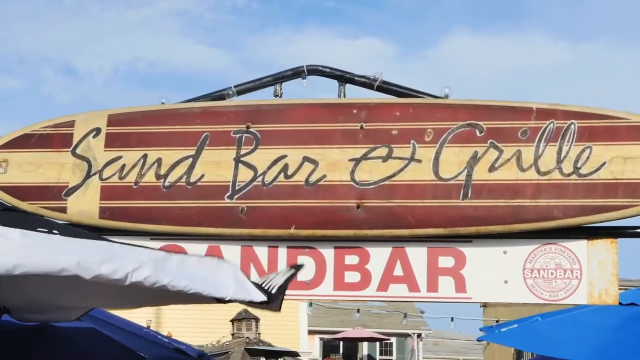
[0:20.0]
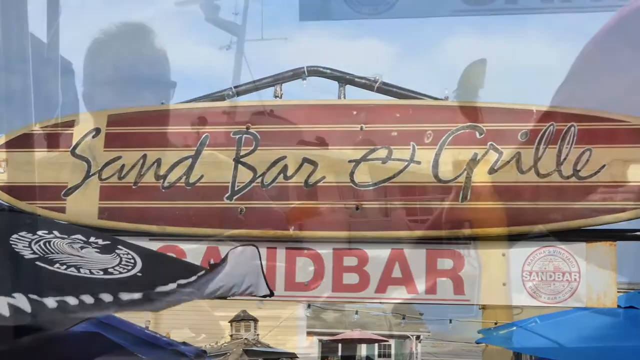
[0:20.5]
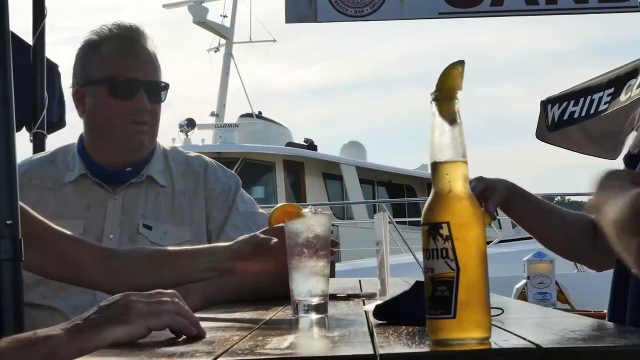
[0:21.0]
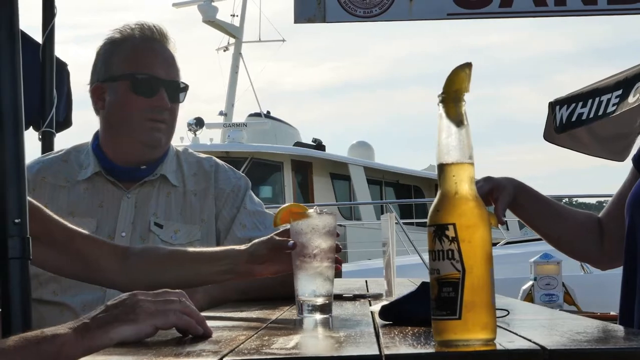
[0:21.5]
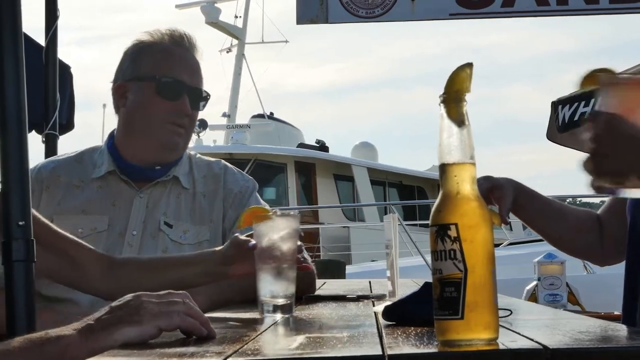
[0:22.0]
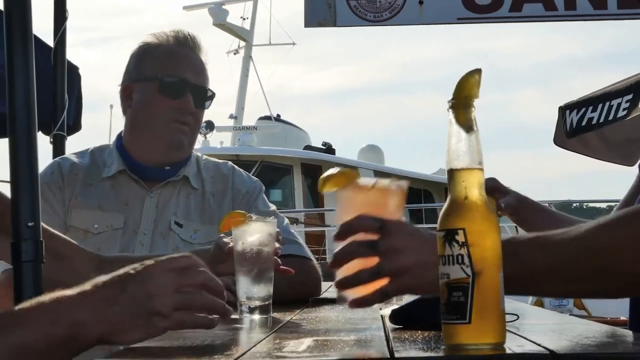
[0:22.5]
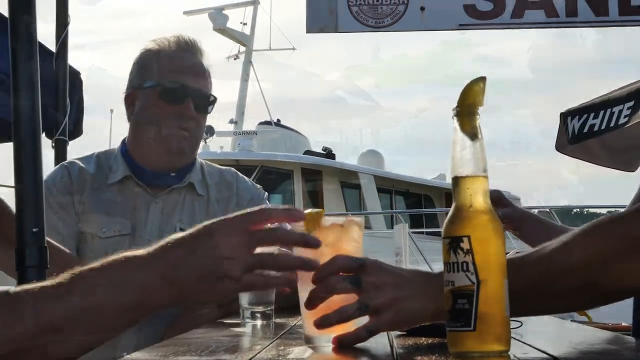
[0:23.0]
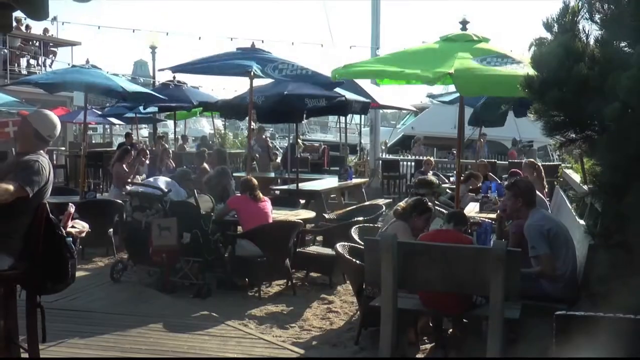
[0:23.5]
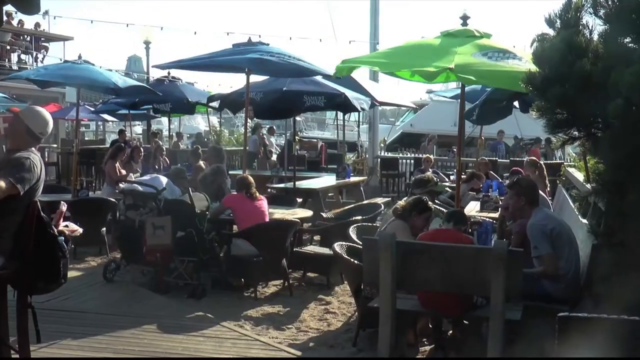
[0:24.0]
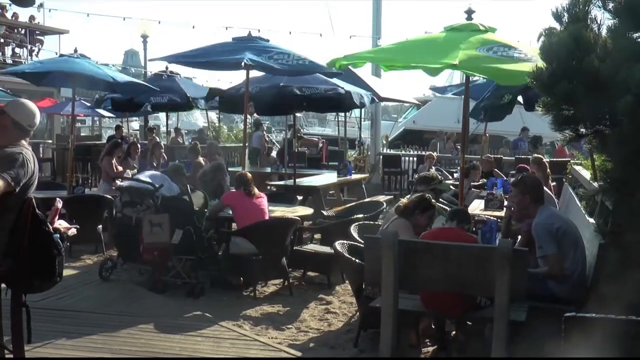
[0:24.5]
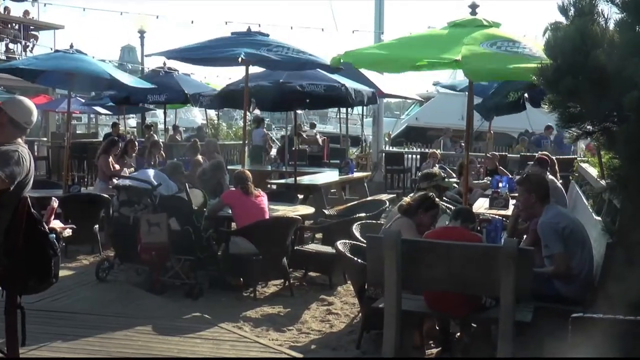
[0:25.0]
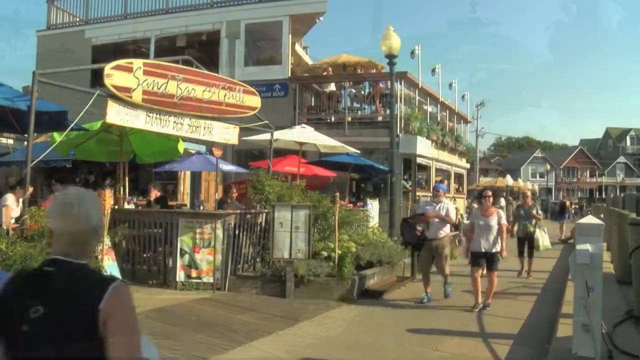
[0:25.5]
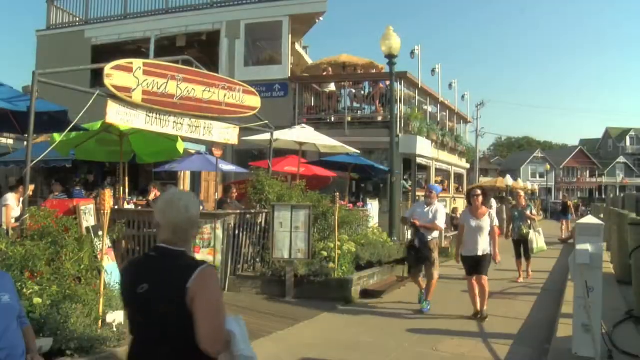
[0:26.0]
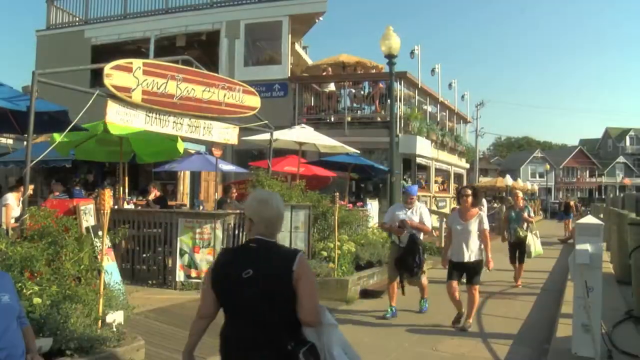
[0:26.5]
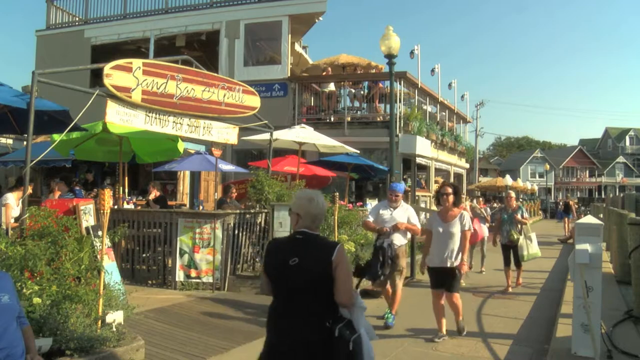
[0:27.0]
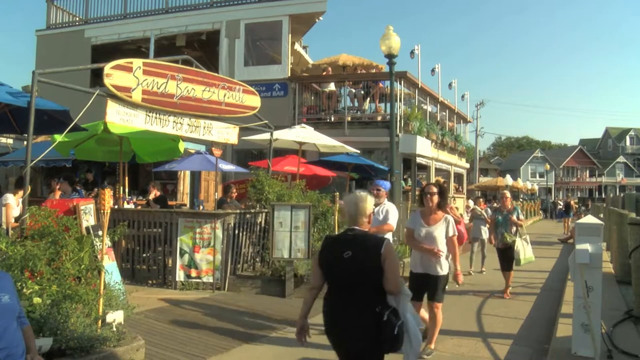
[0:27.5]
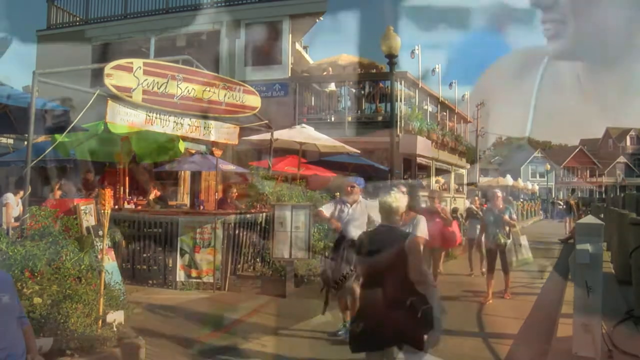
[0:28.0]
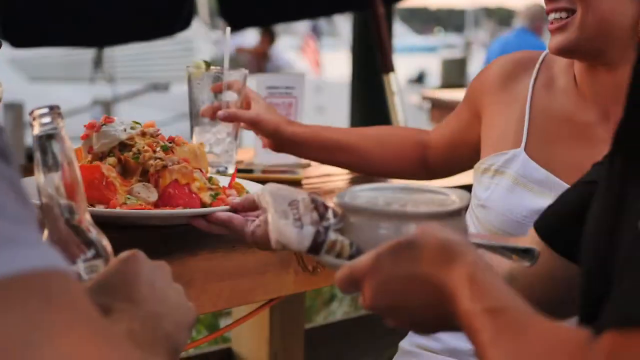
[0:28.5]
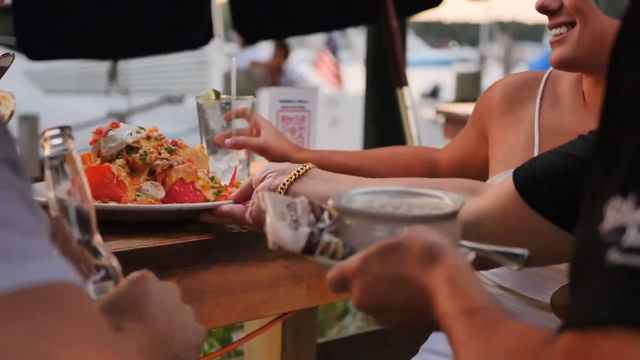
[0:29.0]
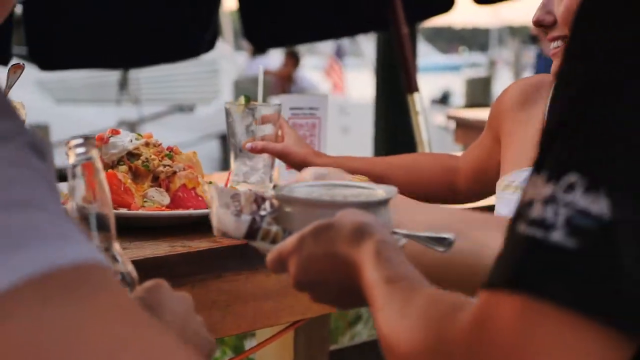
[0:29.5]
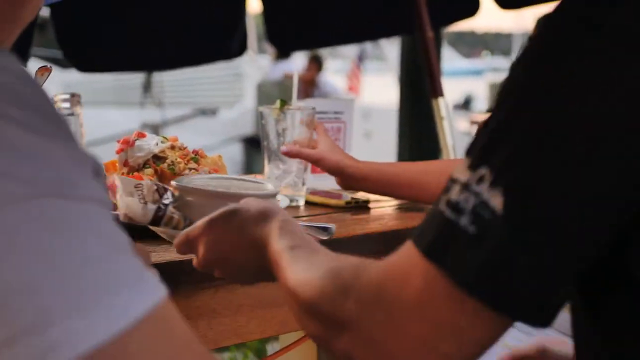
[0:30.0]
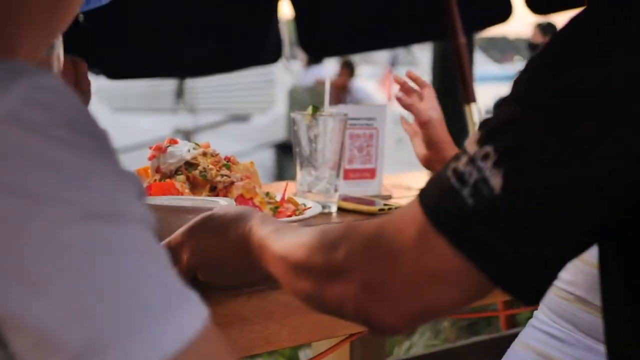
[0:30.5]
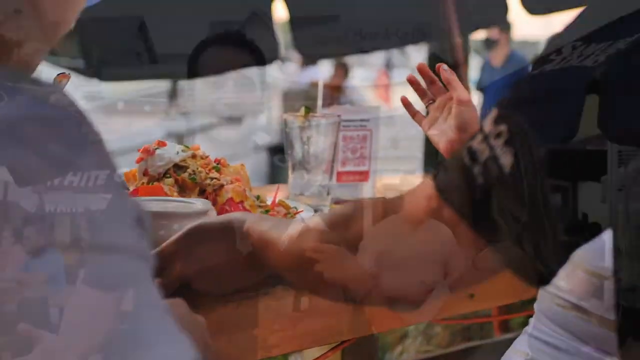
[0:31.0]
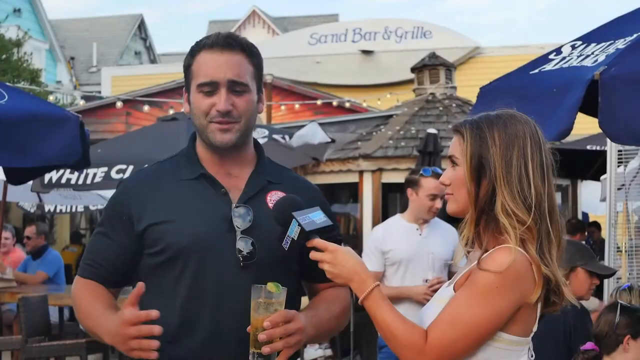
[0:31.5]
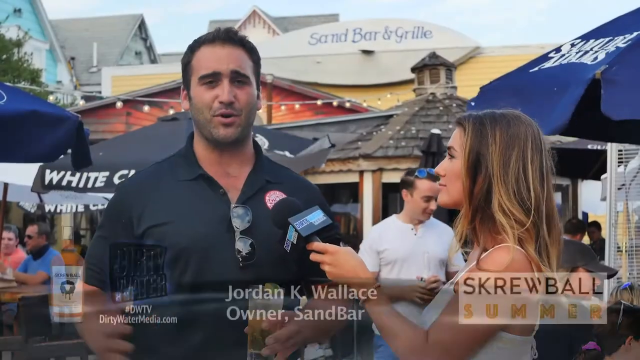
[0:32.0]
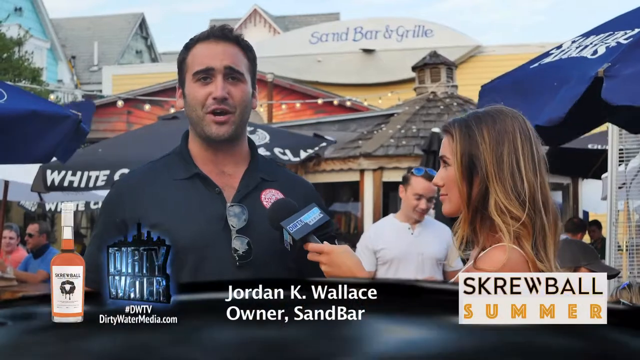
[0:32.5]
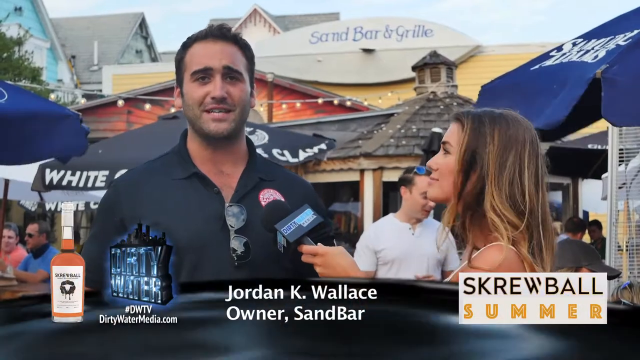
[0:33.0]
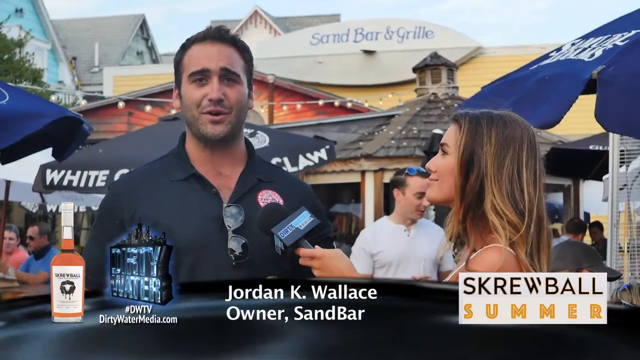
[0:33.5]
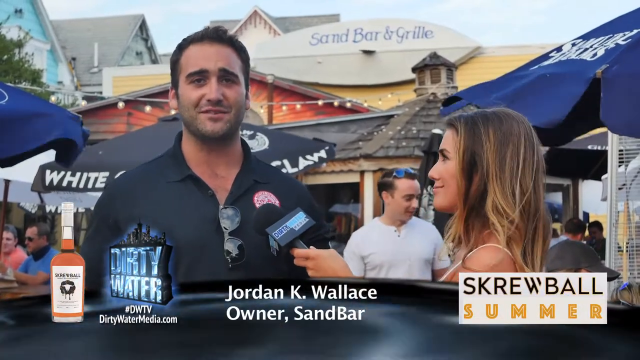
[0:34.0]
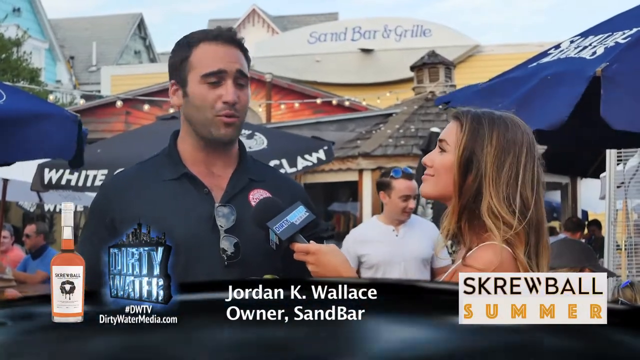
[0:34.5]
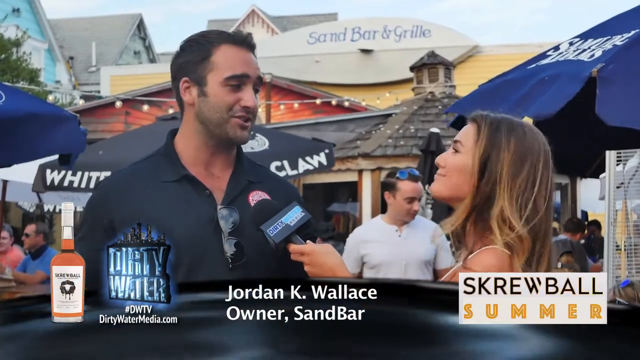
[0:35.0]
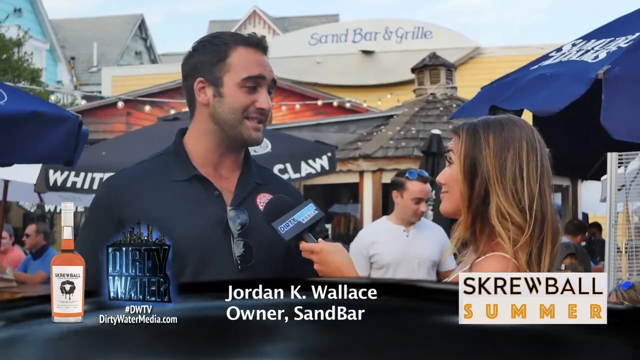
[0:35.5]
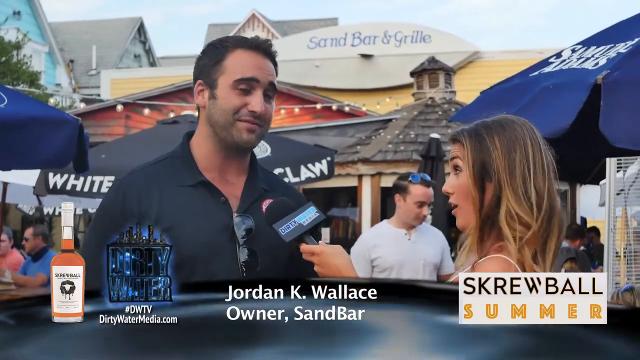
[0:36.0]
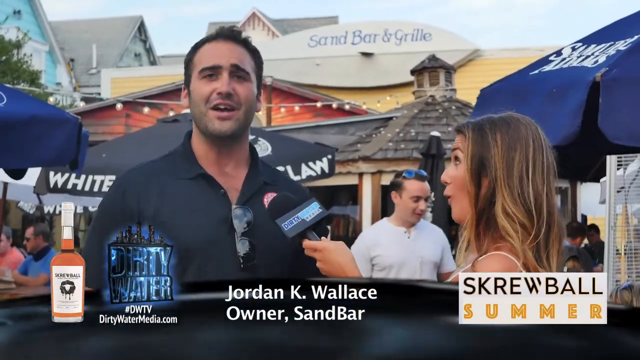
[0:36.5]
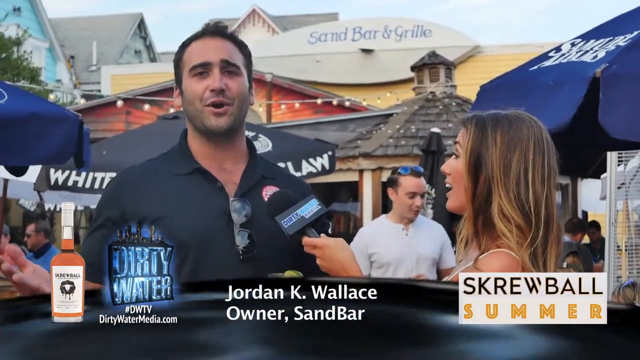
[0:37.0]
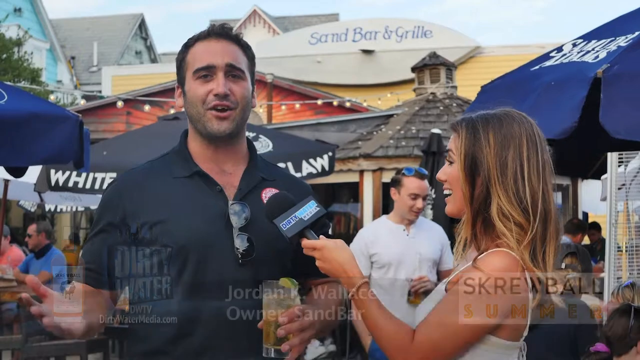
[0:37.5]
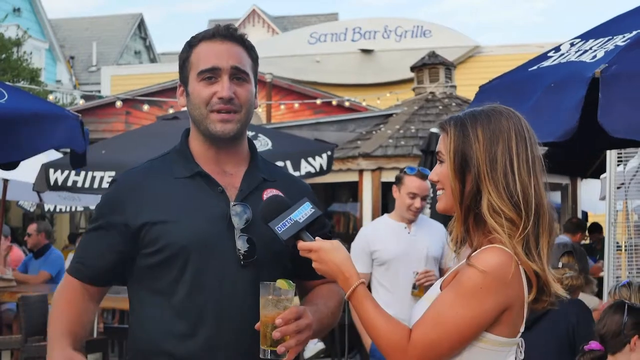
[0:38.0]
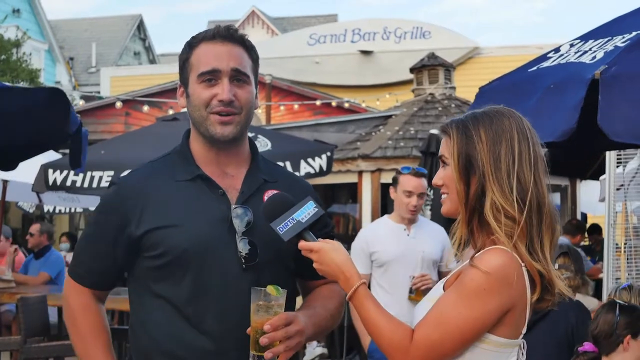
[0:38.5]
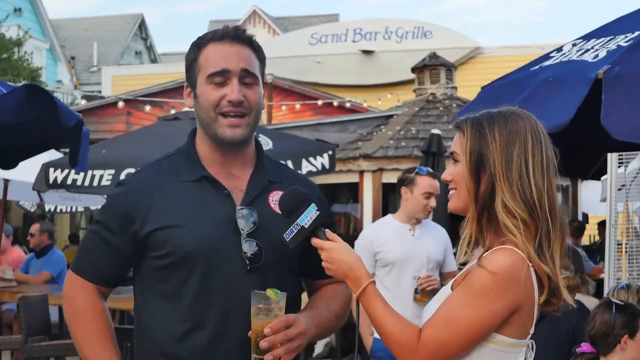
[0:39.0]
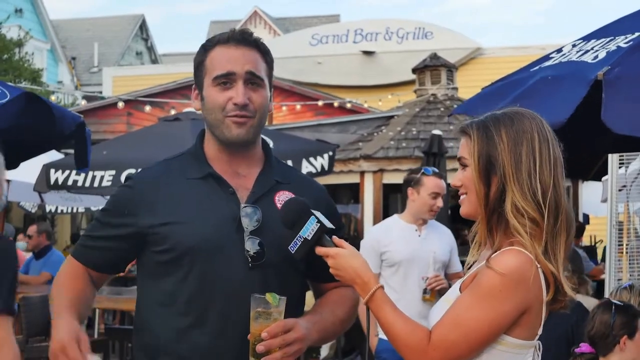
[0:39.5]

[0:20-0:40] A banner reads "the sandbar and grill," which seems to be the name of the bar. The next shot shows a boat behind people sitting at the bar, who seem to be drinking margaritas with an orange on them, and more umbrellas at the front of the bar. The place is loaded with people who seem to be enjoying their time. It is a windy day, and the blue, green and black umbrellas flap. The scene cuts to the outside of the bar, a street that seems busy with women and men passing by. Then it cuts to a bar where someone serves food and drinks on the counter, and everybody is laughing and looks happy. Next, the reporter interviews a man named Jordan K. Wallace, the owner of the Sandbar, who seems excited about the bar and the interview.